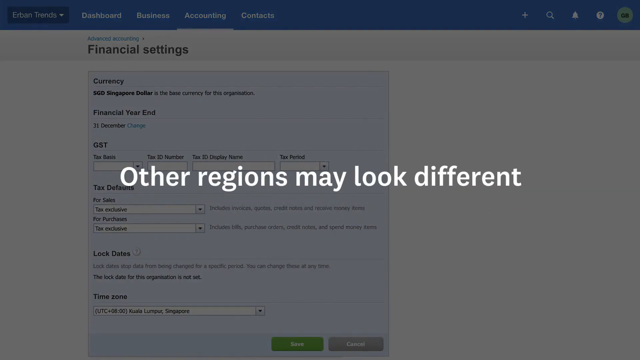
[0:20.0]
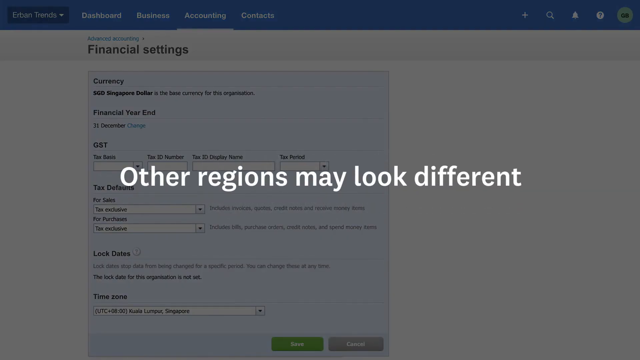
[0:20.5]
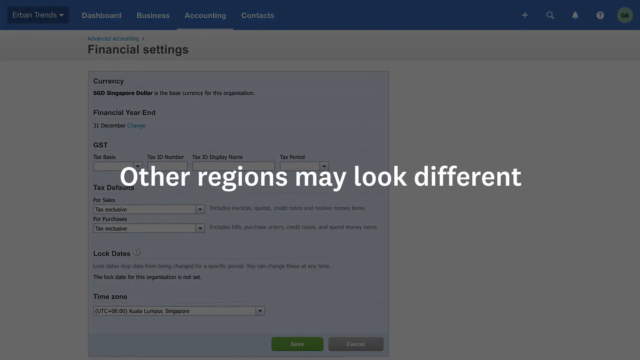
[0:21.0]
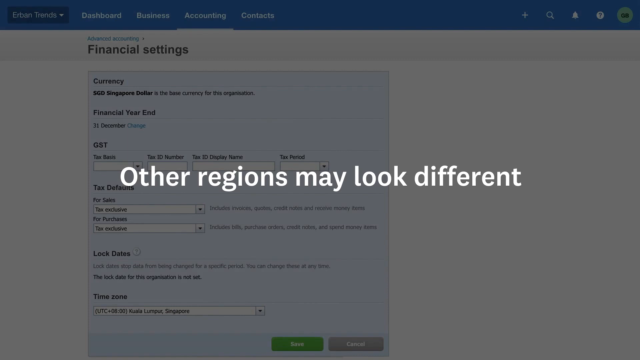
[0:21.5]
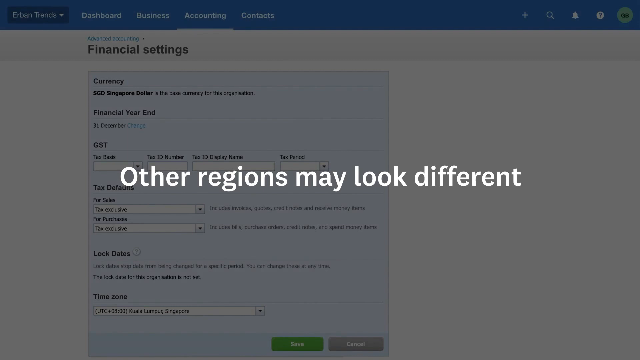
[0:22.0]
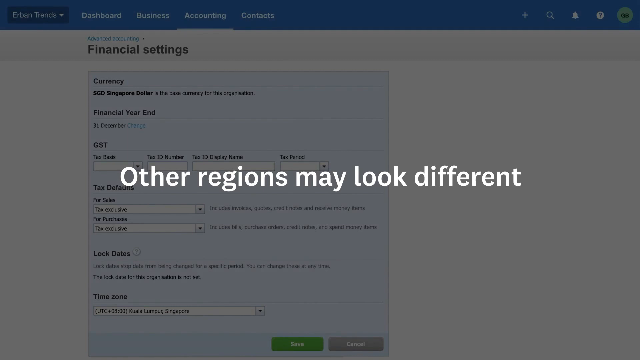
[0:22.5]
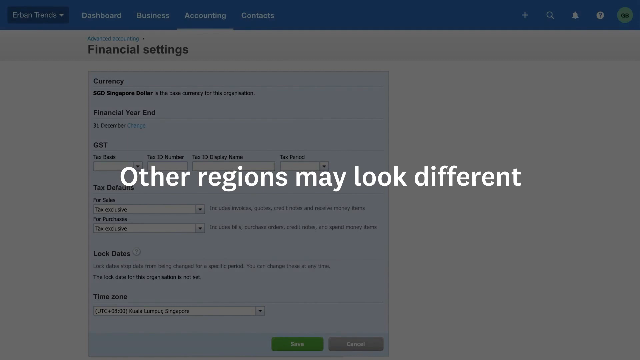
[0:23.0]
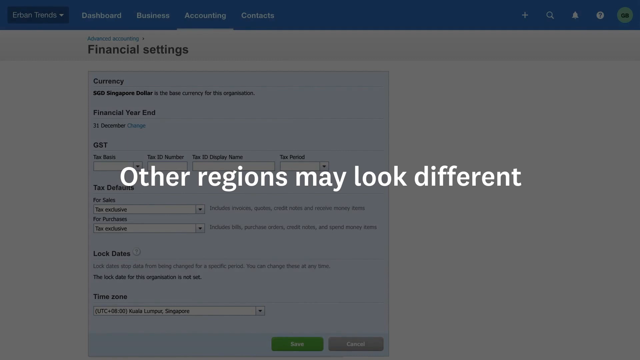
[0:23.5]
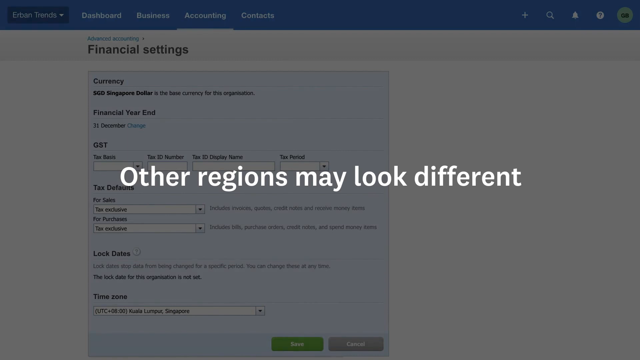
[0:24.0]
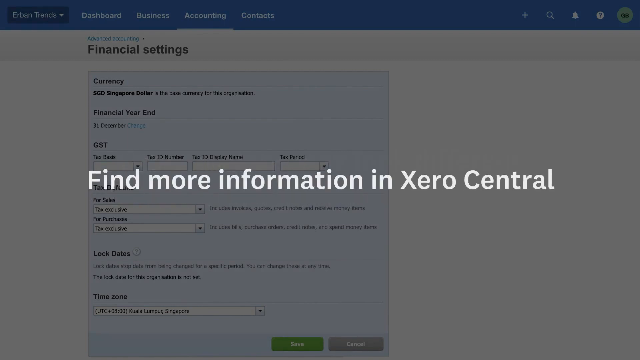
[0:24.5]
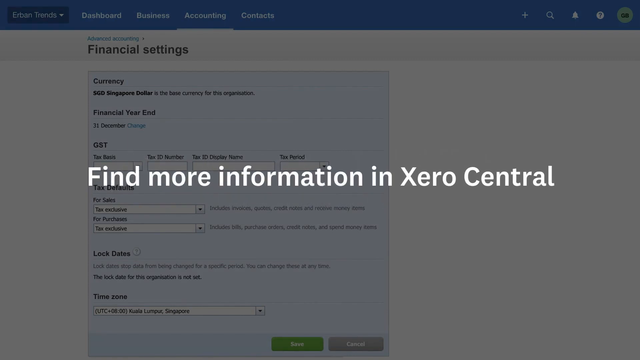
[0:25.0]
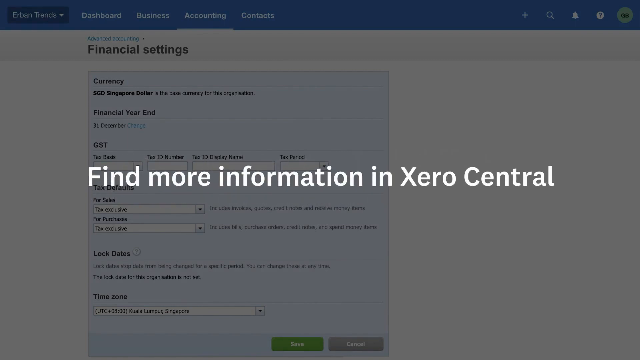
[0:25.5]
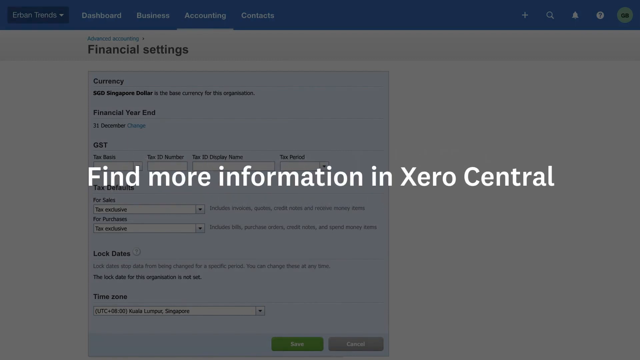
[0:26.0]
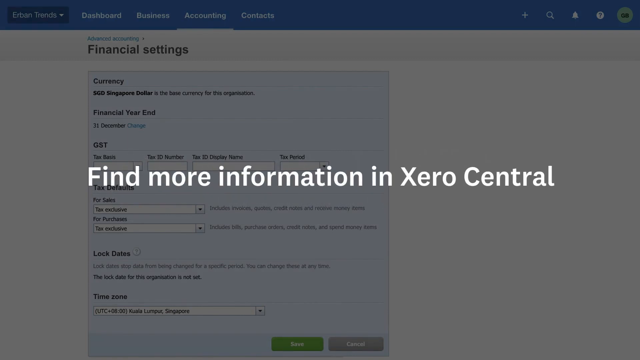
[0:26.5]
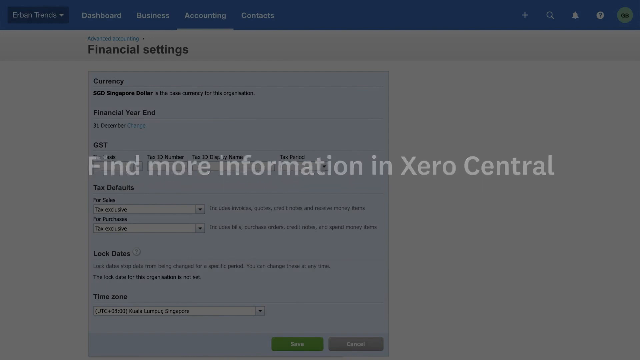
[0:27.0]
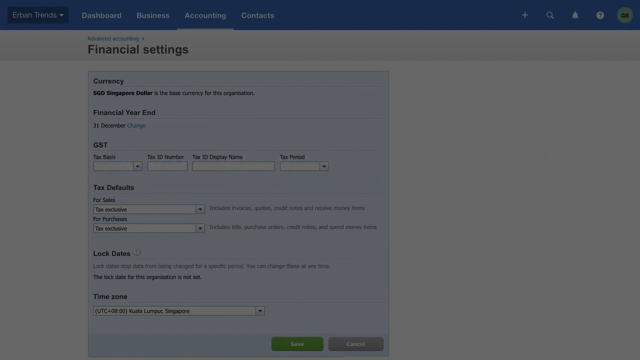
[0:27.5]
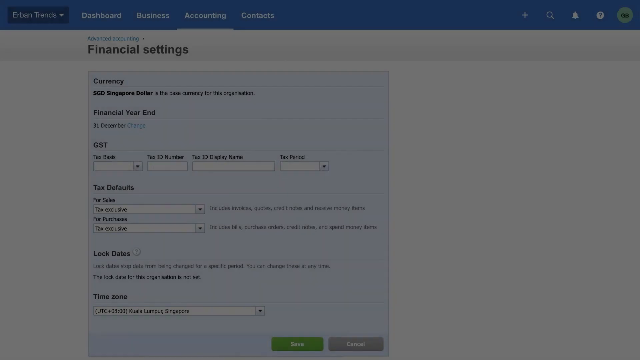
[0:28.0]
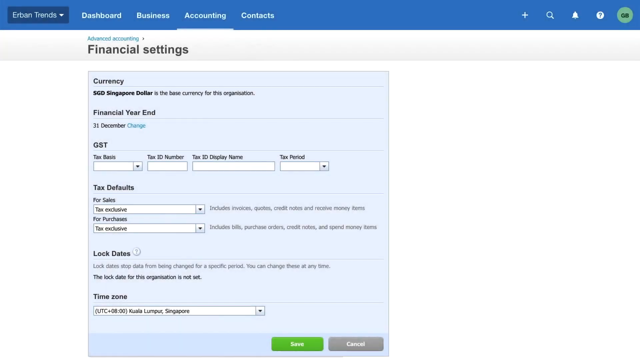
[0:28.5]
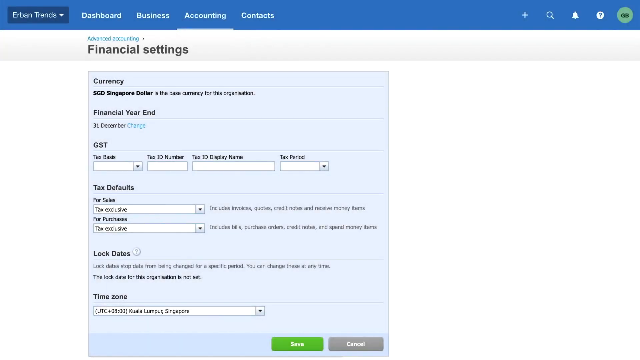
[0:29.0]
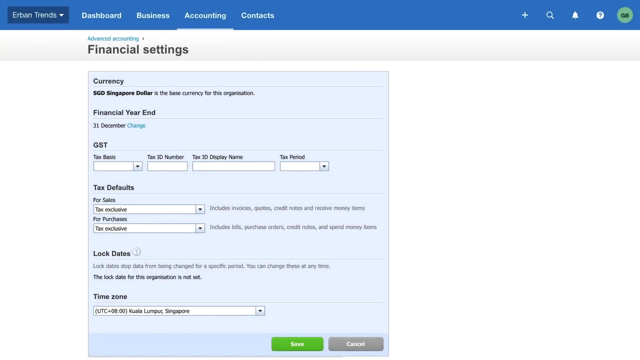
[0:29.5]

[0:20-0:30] The overlay reads "other regions may look different" and "find more information in Xero central." The video scrolls through the various overlays and then returns to the full main screen, a financial settings page listing 31st of December, fiscal year, change, GST, tax basis, tax ID number, tax ID display name, tax period, tax defaults for sales and for purchases, tax exclusive, lock dates, and a time zone set to Kuala Lumpur and Singapore. A blue bar runs across the top, and on its right-hand side are a plus sign, a magnifying glass, a question mark and other symbols.